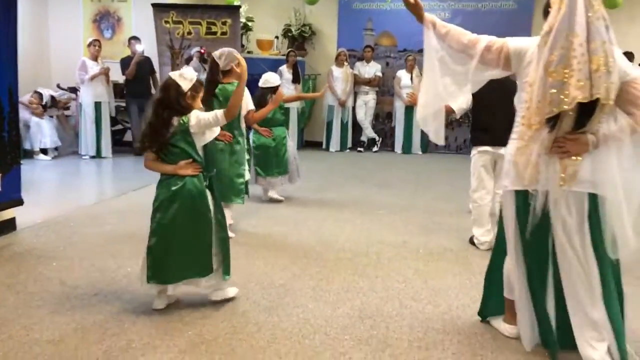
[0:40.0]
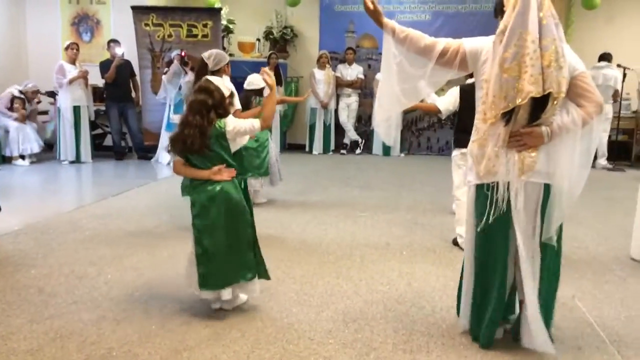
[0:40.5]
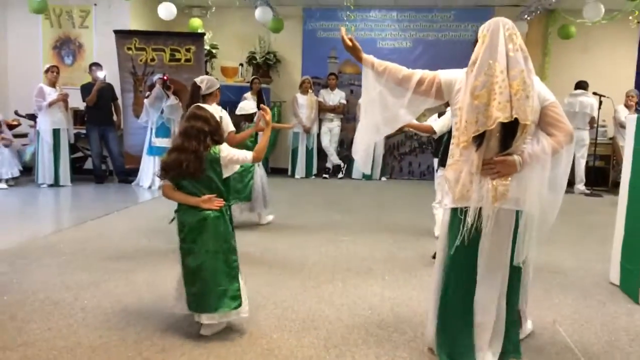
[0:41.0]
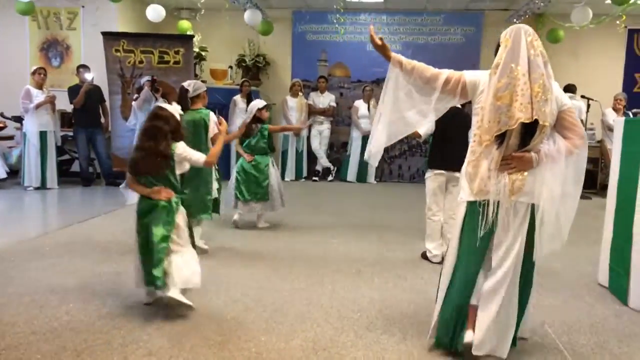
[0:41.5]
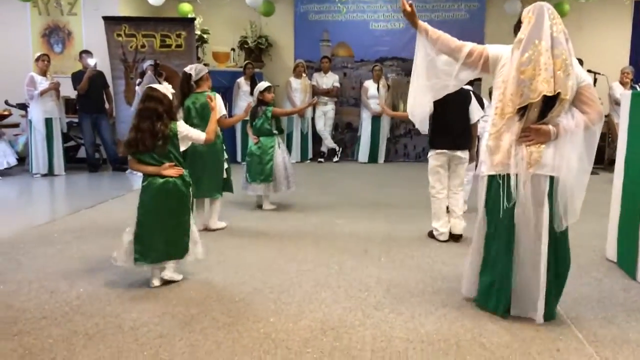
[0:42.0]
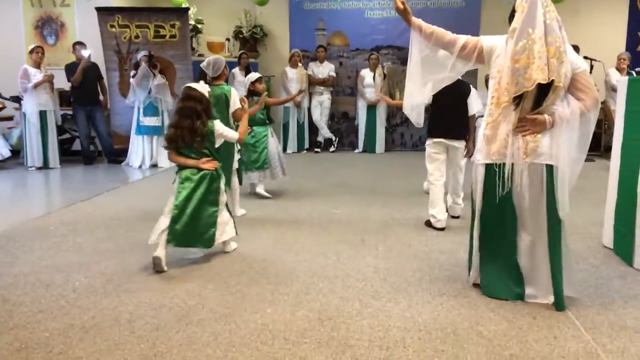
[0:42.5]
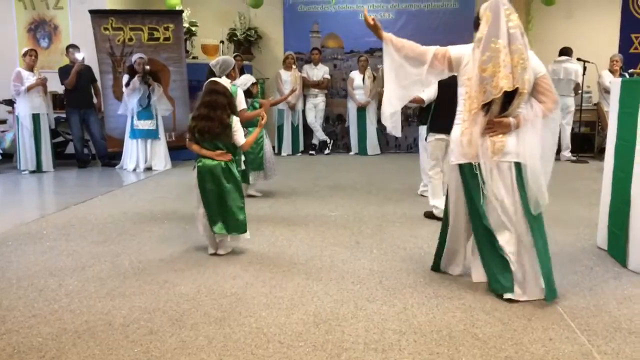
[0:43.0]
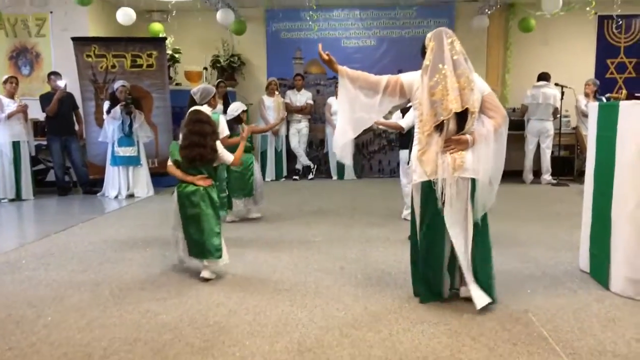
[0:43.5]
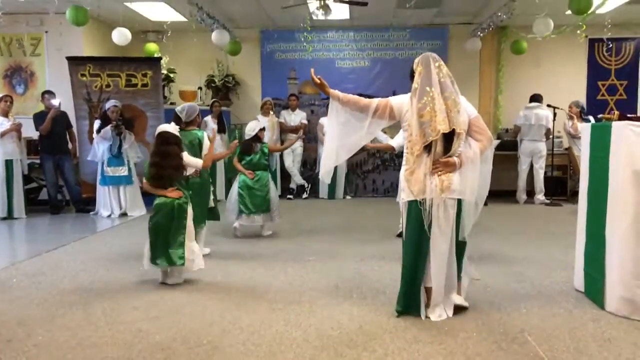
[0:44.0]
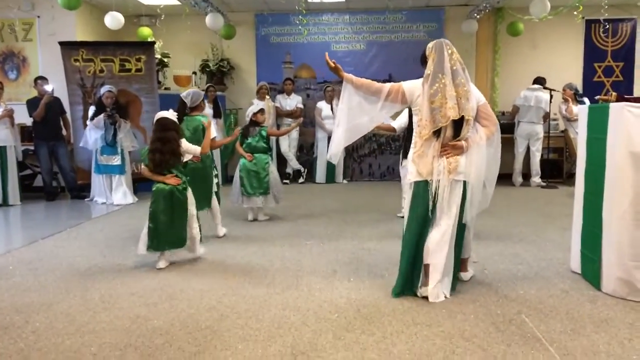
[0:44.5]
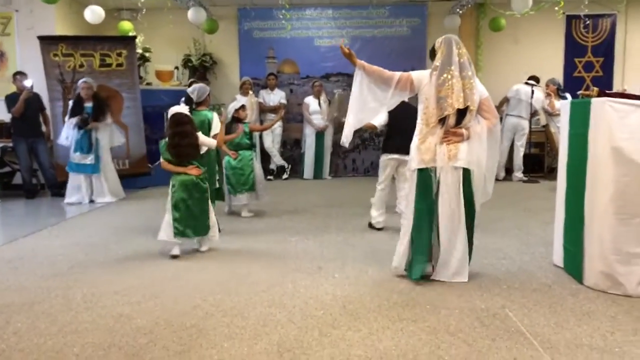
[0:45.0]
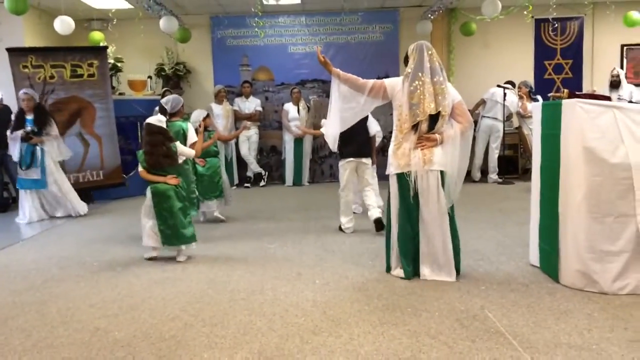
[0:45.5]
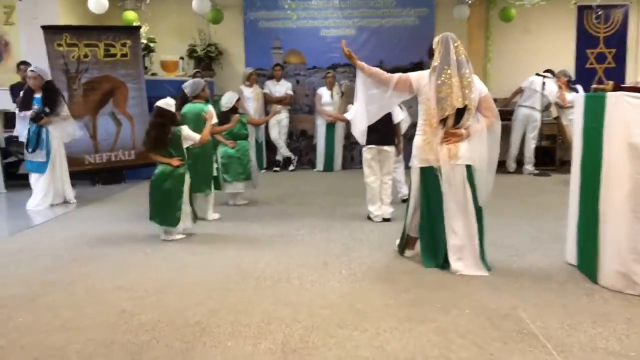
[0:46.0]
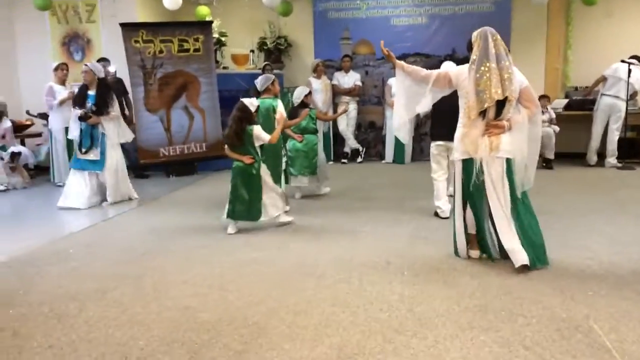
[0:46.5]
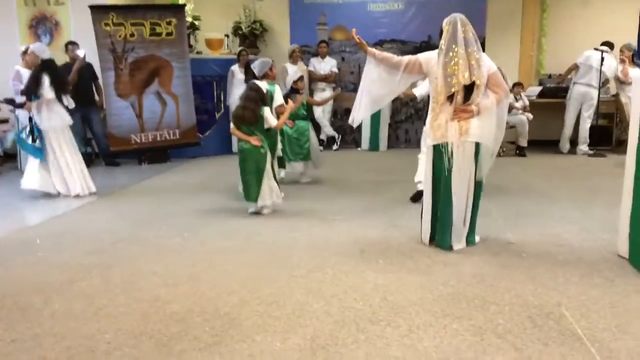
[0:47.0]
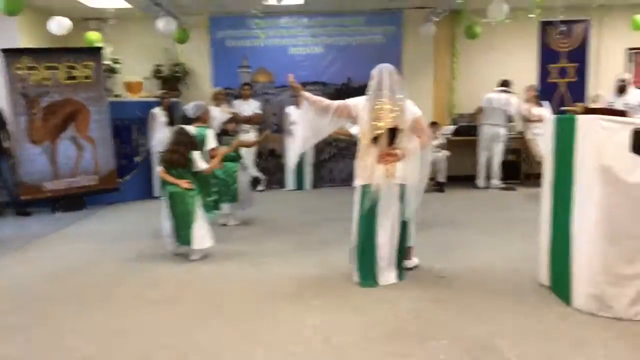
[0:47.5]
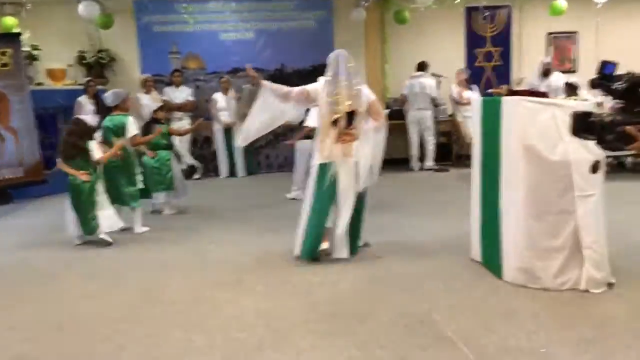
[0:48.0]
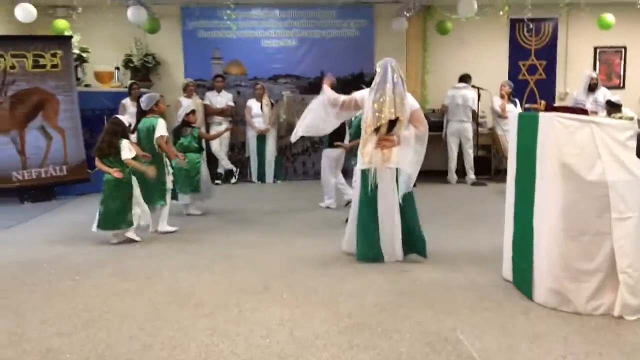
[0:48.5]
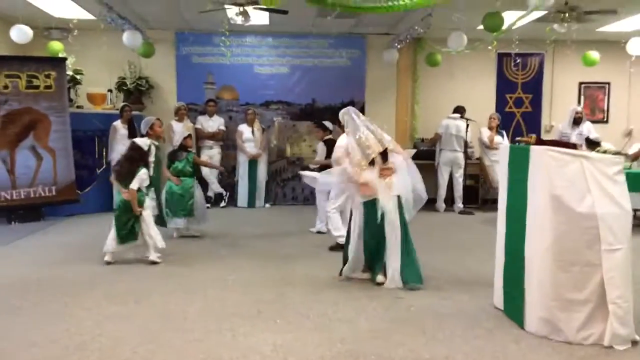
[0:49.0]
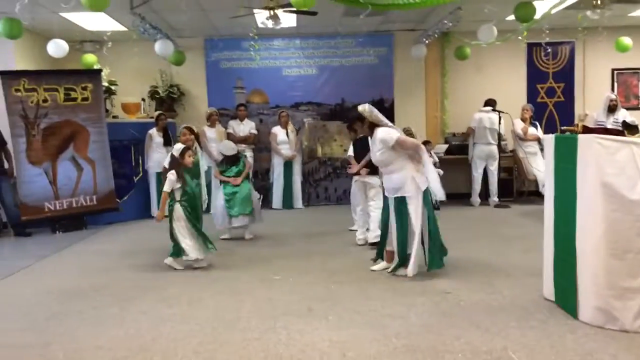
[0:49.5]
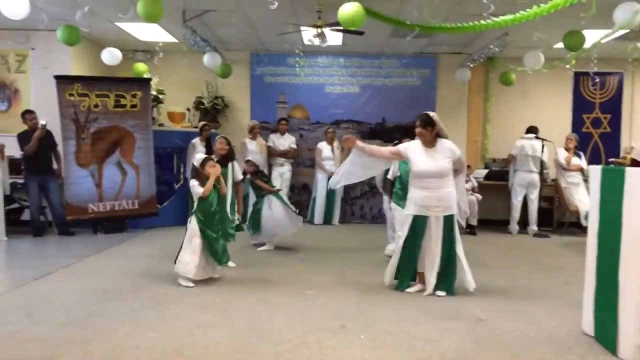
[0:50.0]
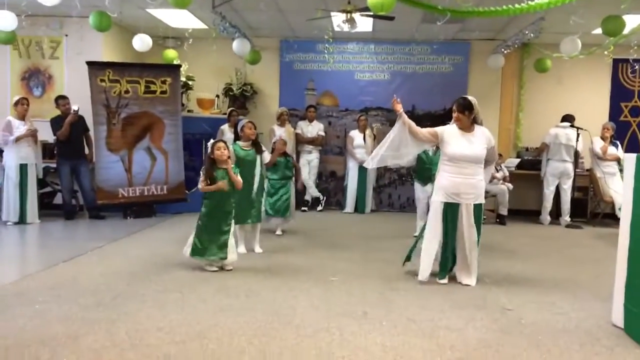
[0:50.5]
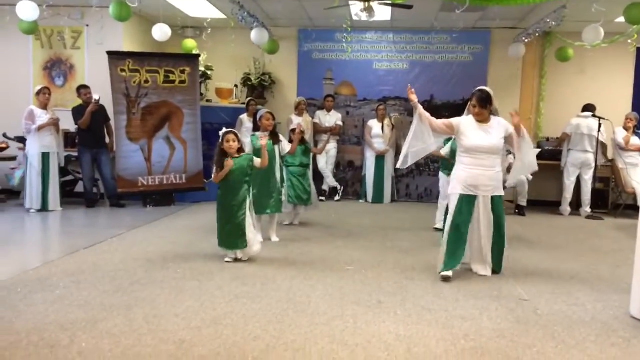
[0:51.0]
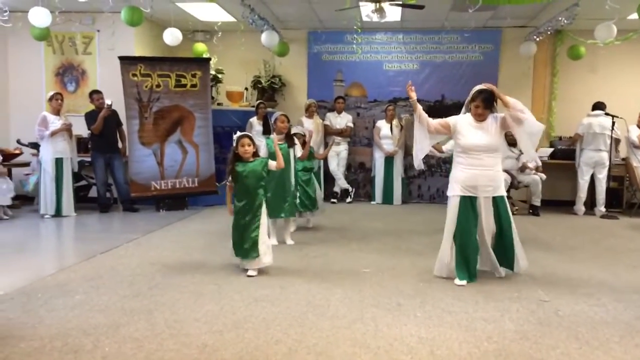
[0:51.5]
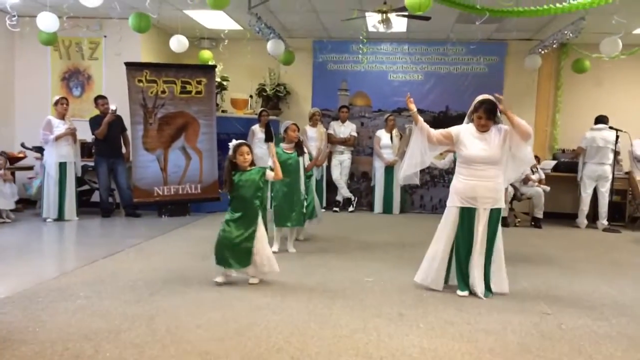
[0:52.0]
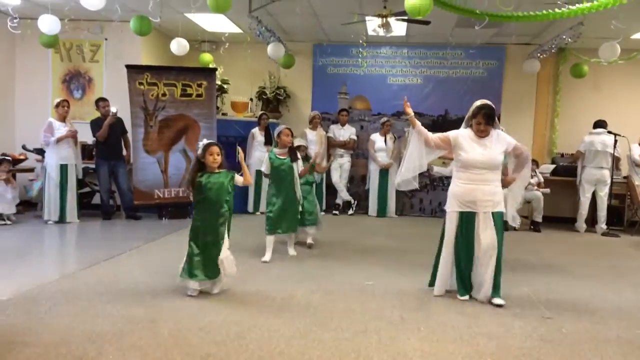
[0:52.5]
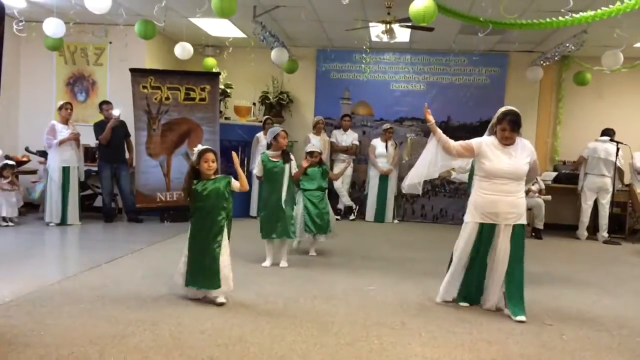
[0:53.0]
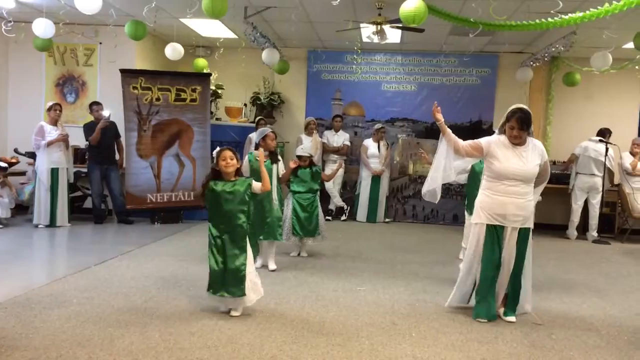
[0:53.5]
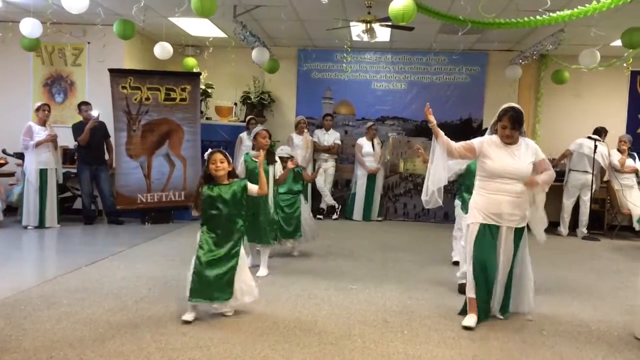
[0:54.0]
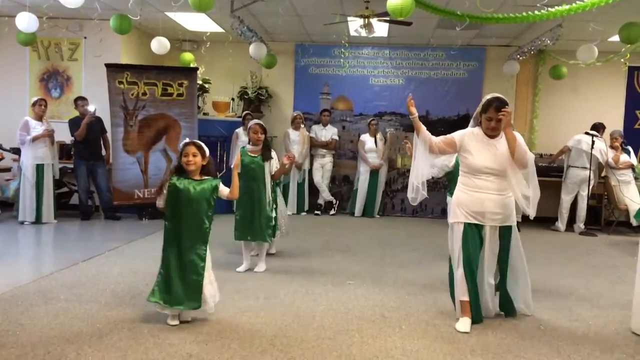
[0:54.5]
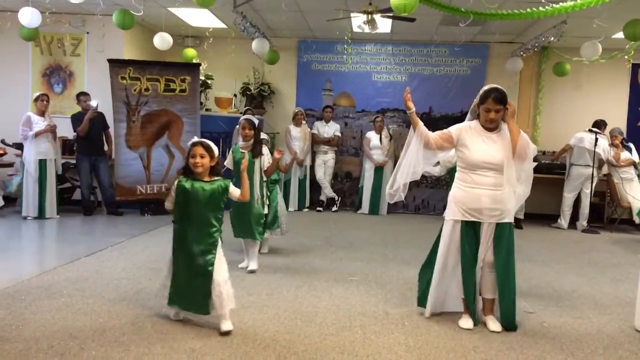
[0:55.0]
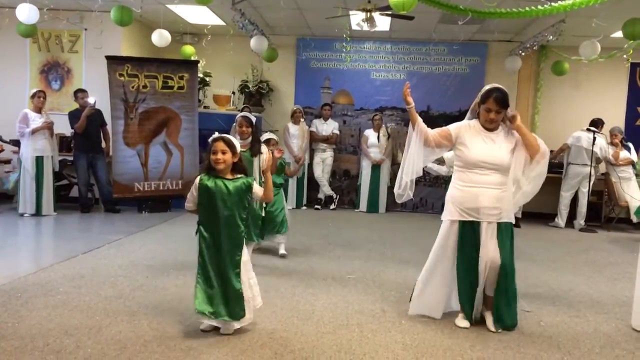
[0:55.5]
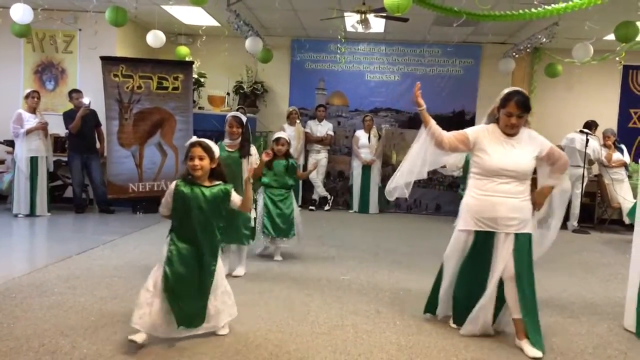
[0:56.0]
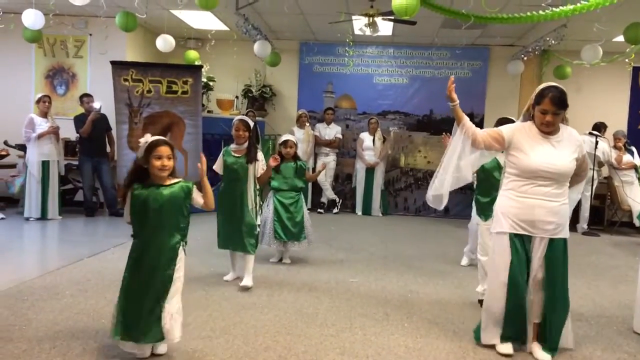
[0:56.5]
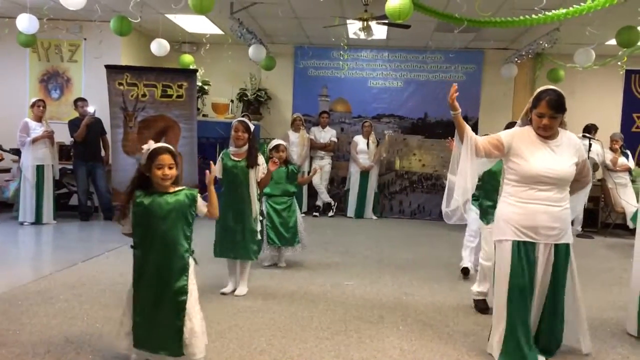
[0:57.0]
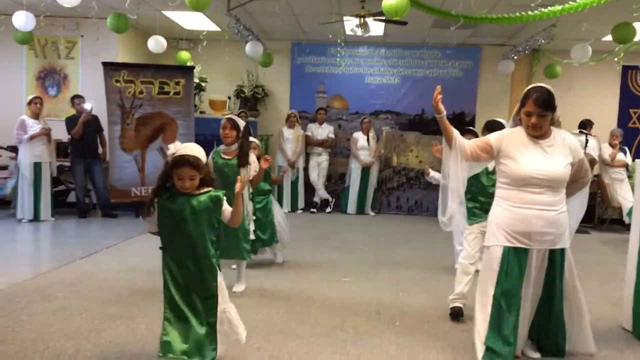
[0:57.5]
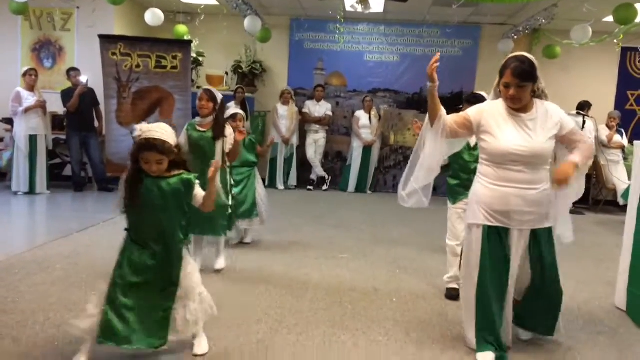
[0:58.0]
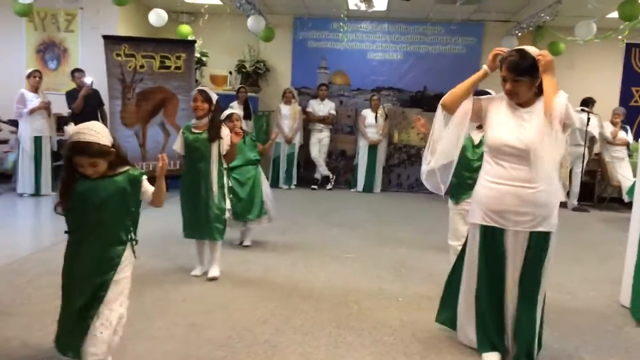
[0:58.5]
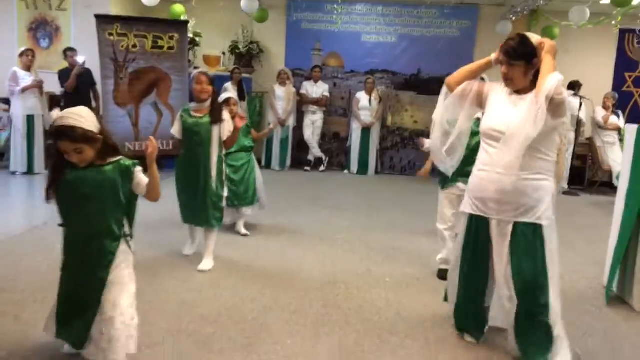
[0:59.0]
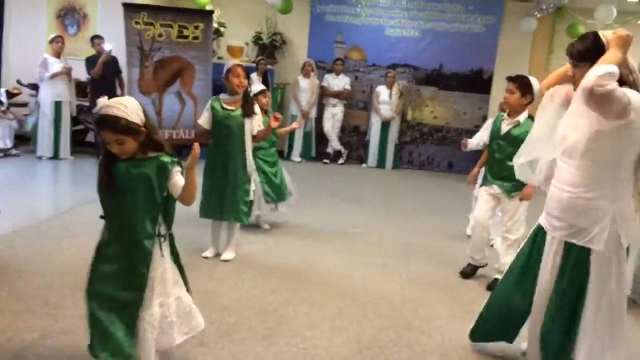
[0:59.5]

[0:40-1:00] The dance continues. The children start with one arm in the air: the boys have their left arm out, and the girls, on the right side, have their right hand out. They take steps, walking in a line, then spin around and walk in the other direction, trying to step in unison. A brown door has writing on it in a brown font with a yellow outline, apparently Hindi.